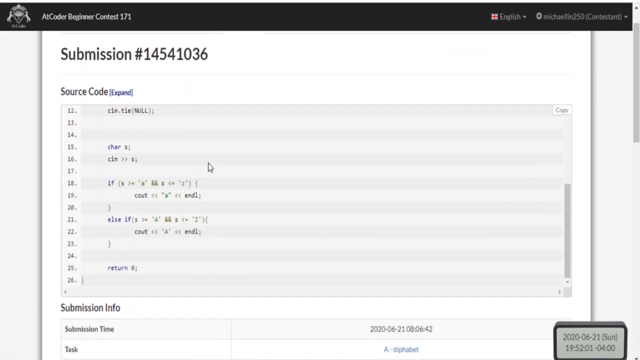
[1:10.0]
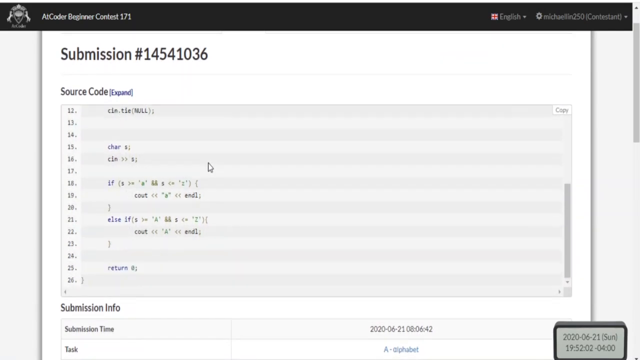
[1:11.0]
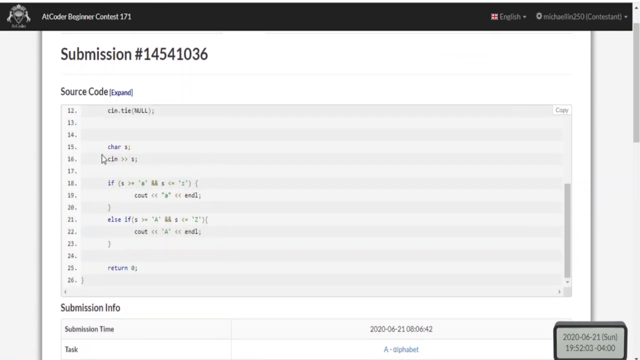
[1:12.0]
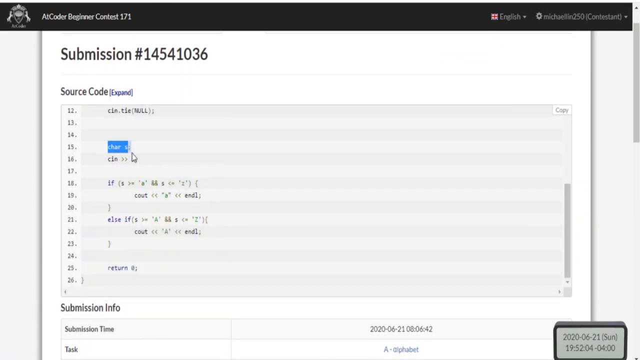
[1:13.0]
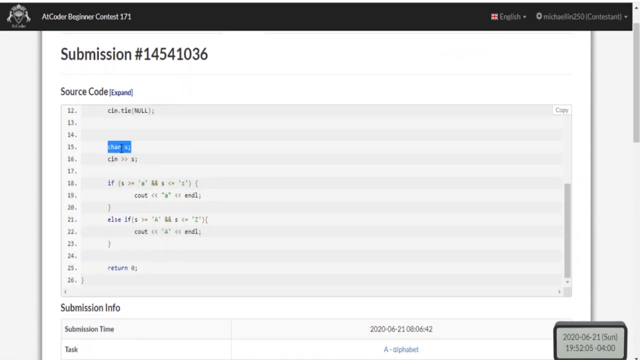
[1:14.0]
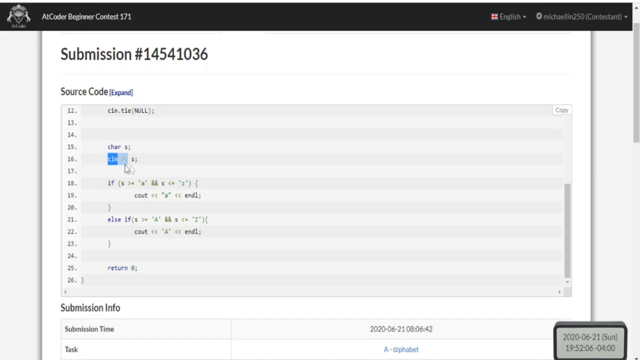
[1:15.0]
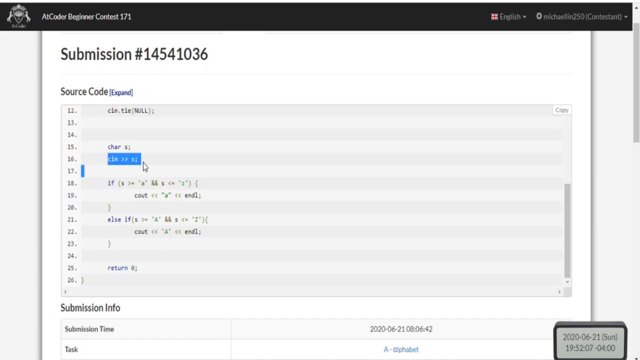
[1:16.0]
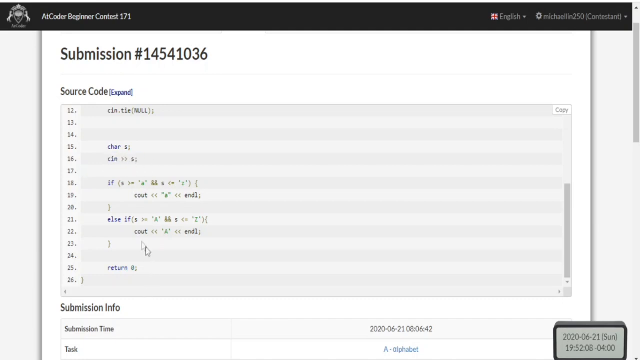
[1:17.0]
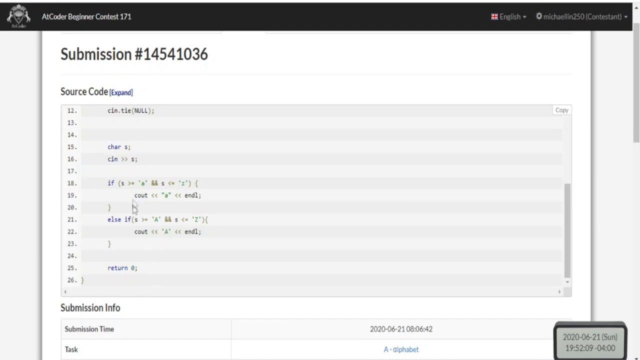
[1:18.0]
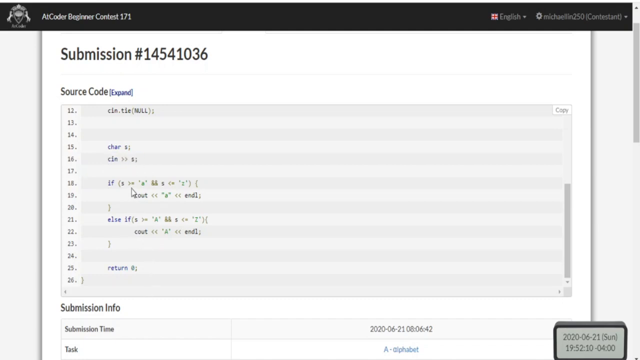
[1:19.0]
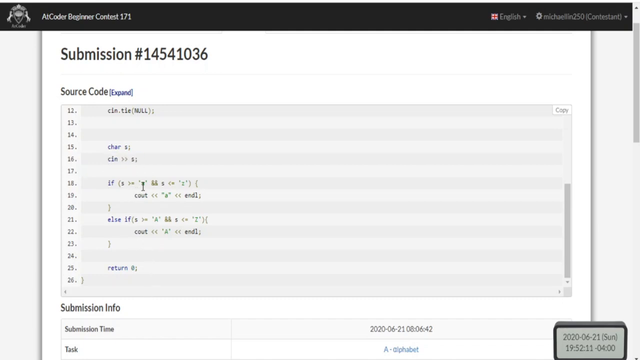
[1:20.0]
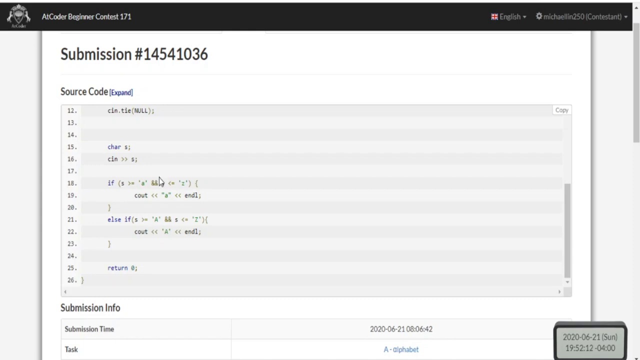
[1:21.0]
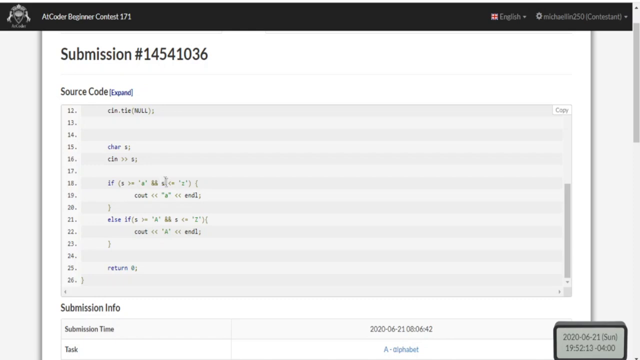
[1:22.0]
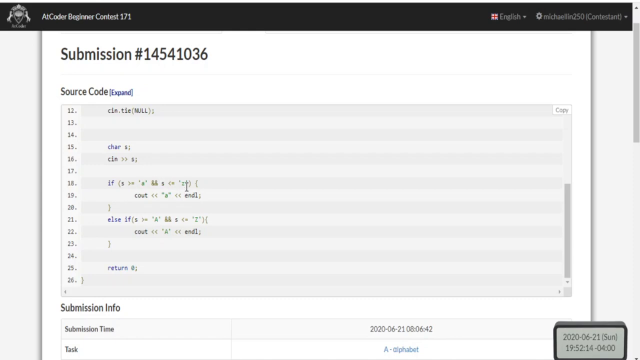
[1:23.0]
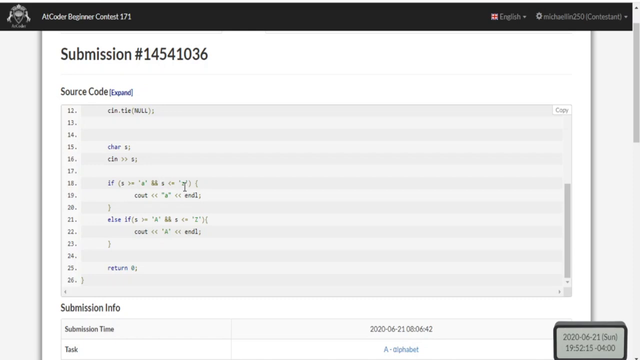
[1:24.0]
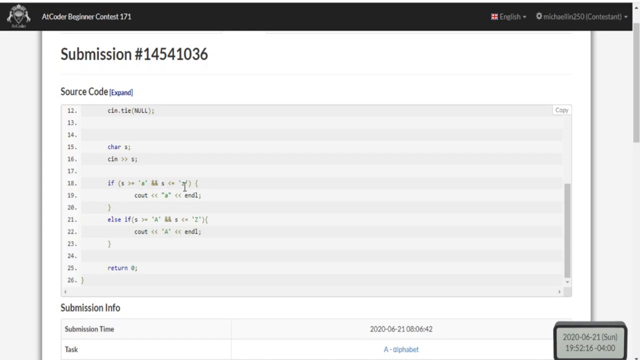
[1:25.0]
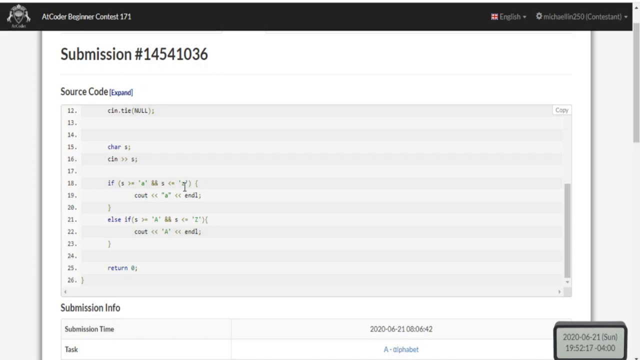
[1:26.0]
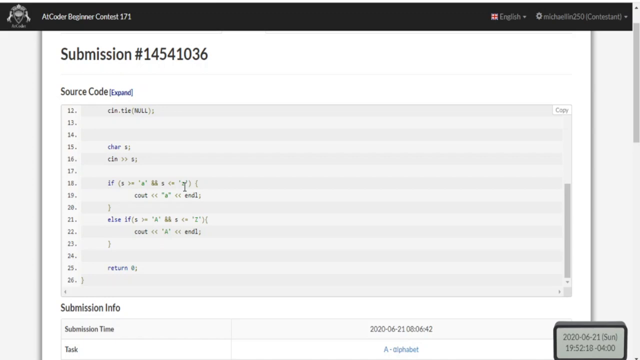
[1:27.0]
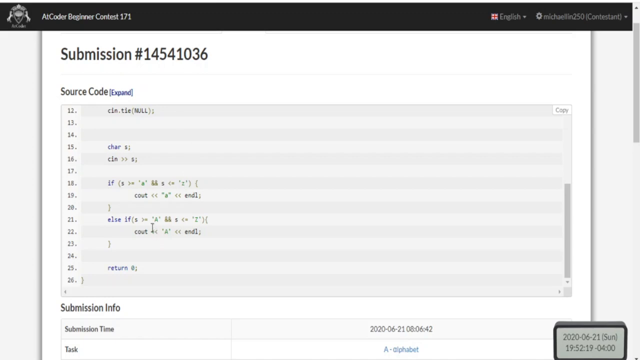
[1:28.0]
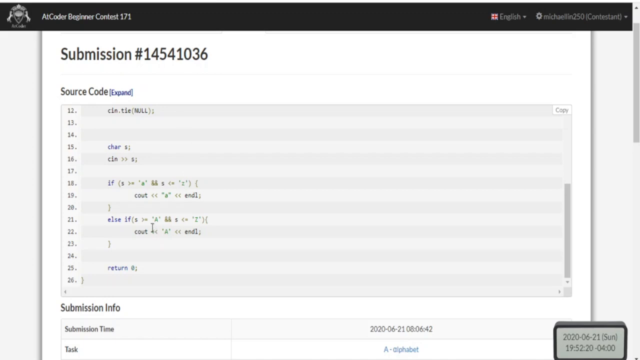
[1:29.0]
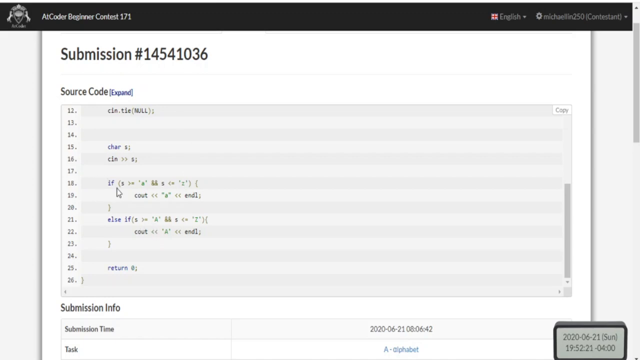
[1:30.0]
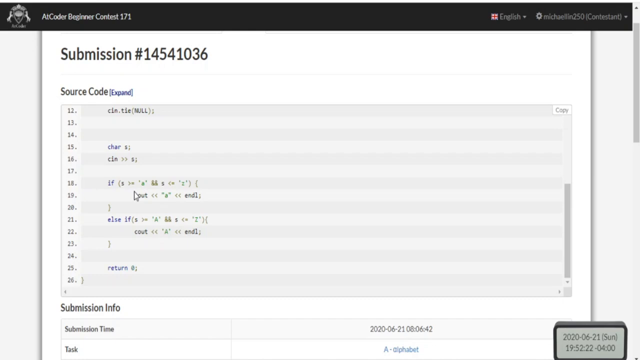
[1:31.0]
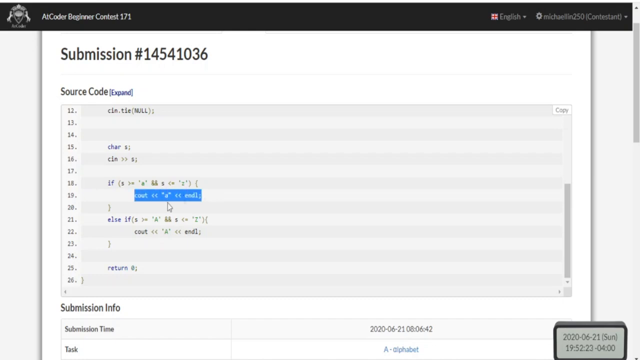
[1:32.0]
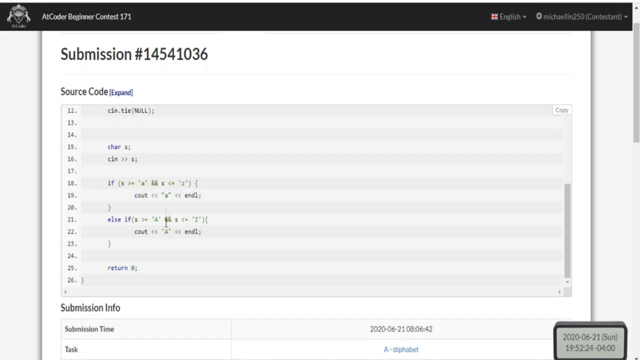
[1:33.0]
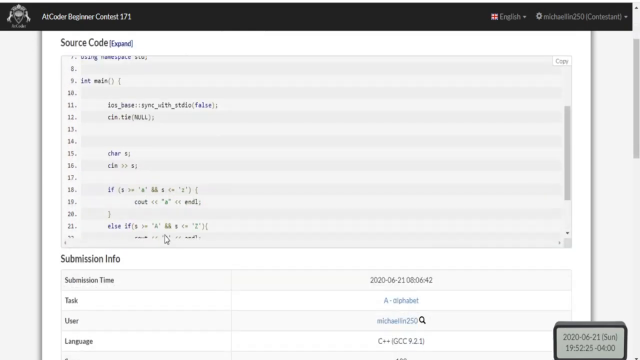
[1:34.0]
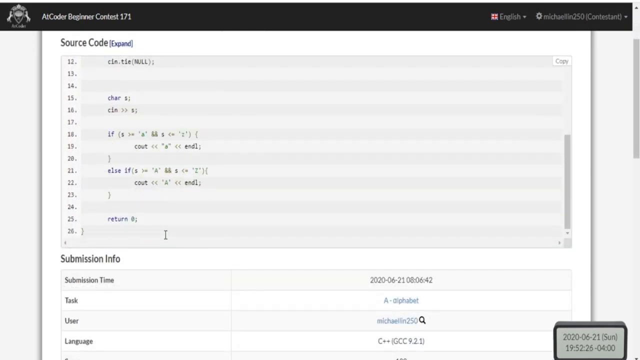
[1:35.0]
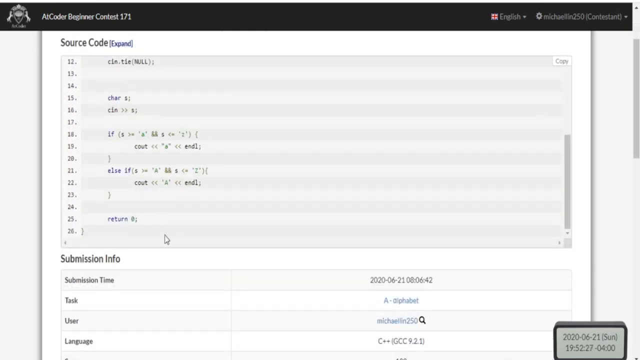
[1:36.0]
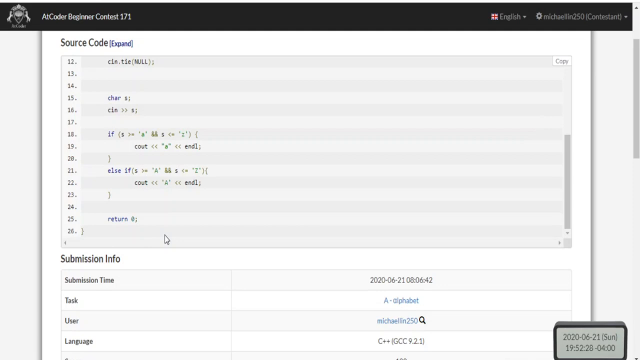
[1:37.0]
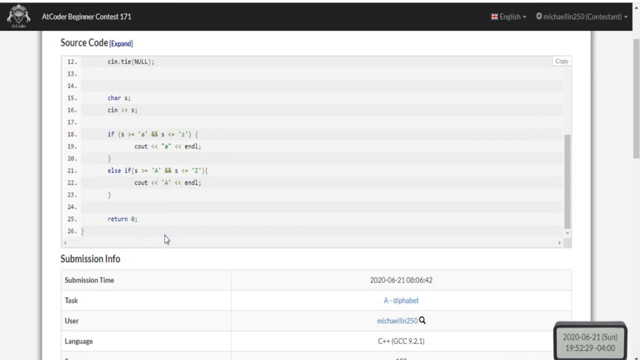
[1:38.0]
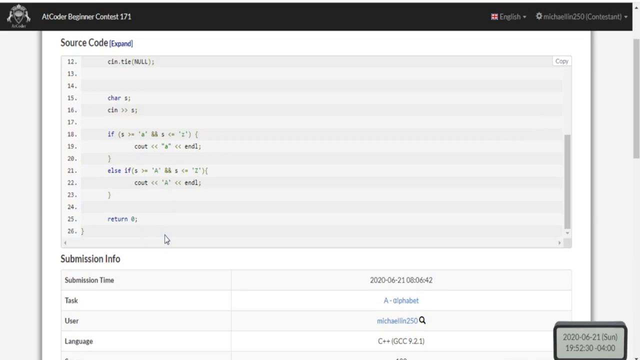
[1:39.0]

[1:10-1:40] What appears to be someone's computer screen shows a banner running left to right at the top, with gray text in the upper left reading "AI Coder Beginner Contest 171." In the upper right are two drop-downs, English and their username. On the virtual sheet of paper below, the upper left reads "submission number 14541036," and below that "source code" with an option to expand it. Then comes a block of code that looks like a series of if else loops with a return at the very bottom. The cursor is placed over one of the if functions, then moves down over one of the if elses. The second part of the if function above is highlighted, then unhighlighted, and the view scrolls down and then up, then rests at the bottom for a moment. The functions and variables are in blue, and the visible lines appear to be 12 through 26.